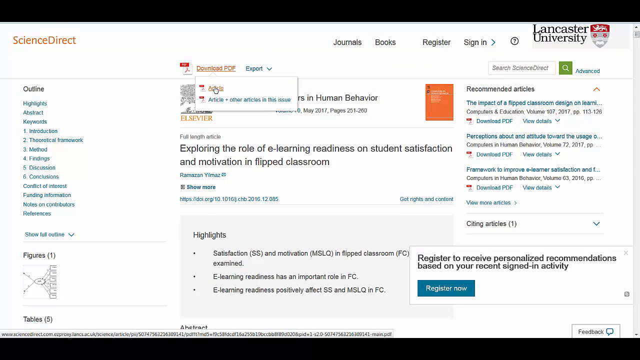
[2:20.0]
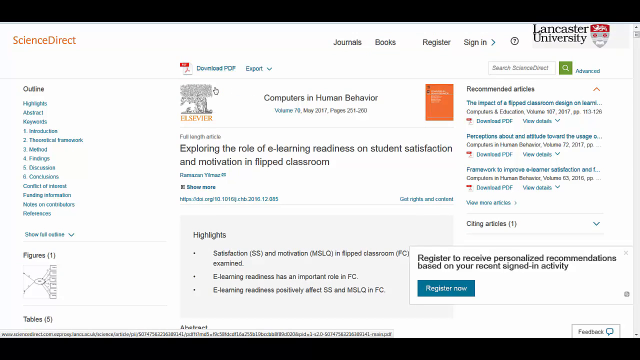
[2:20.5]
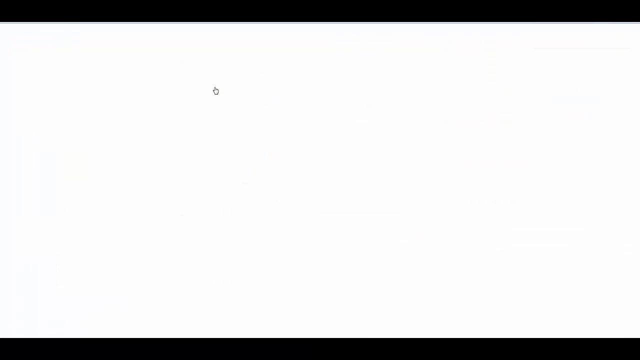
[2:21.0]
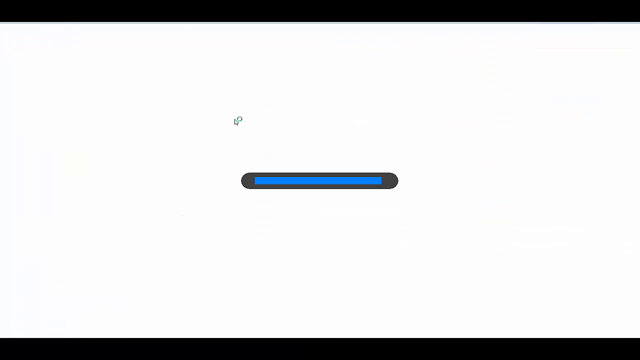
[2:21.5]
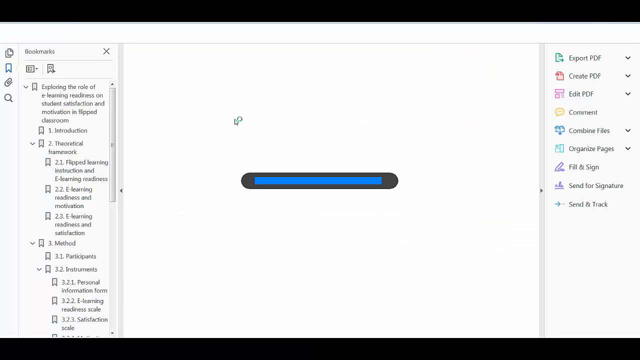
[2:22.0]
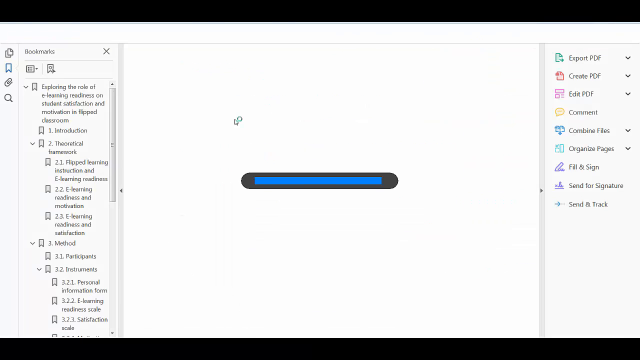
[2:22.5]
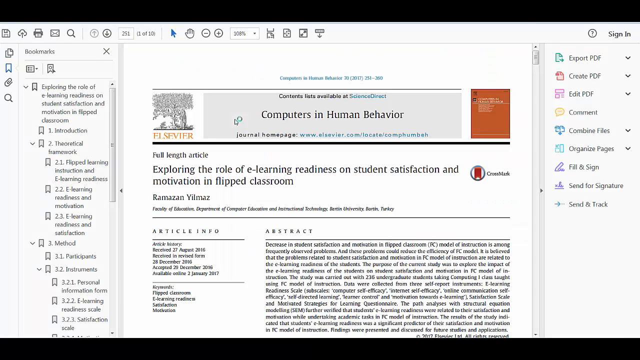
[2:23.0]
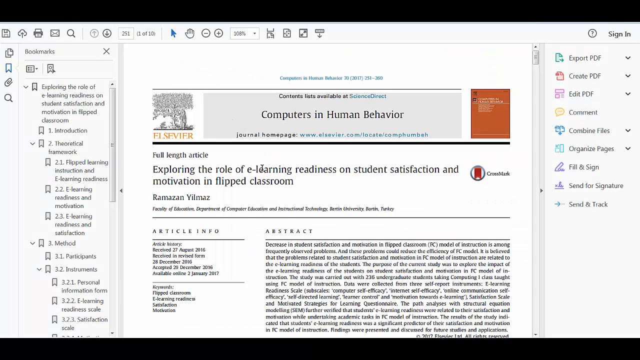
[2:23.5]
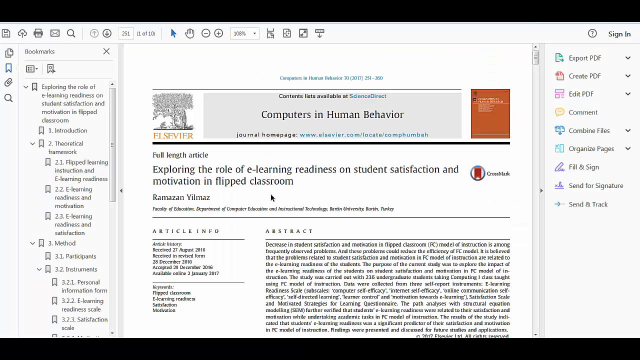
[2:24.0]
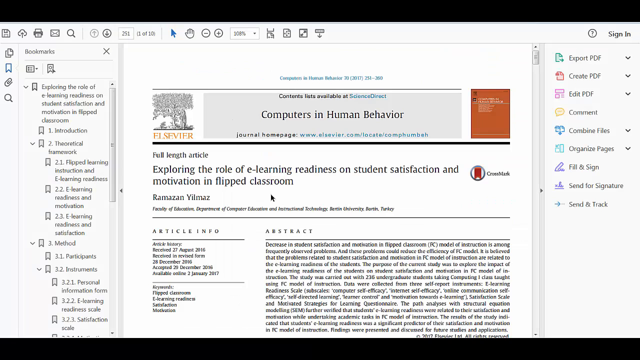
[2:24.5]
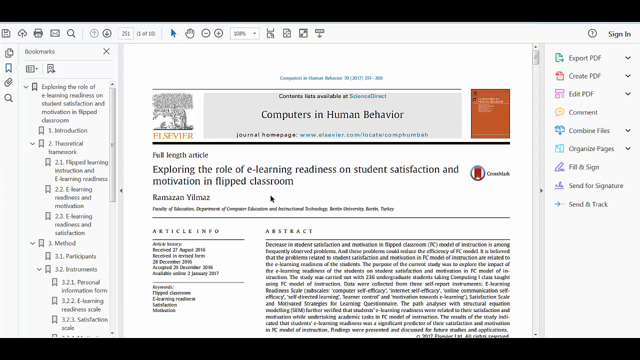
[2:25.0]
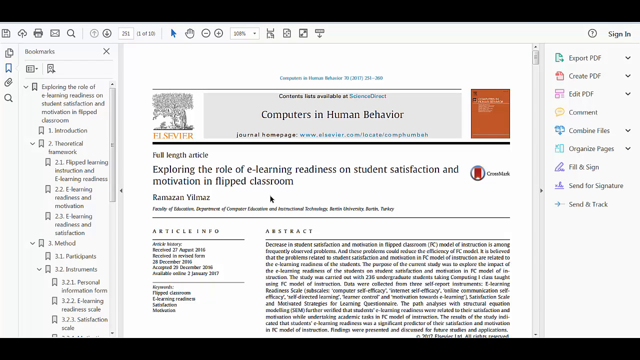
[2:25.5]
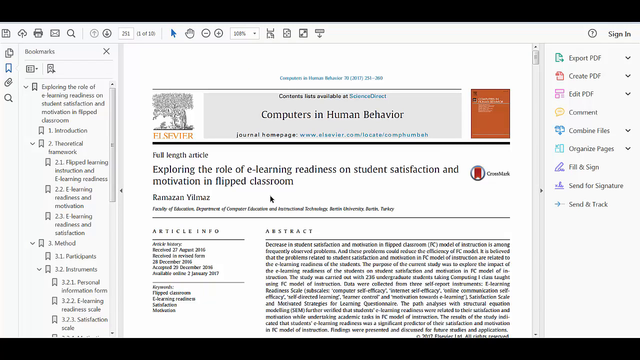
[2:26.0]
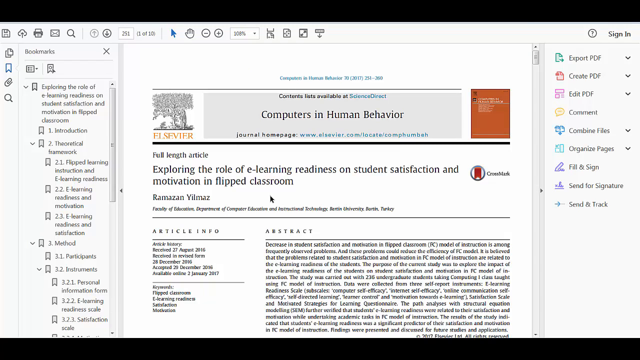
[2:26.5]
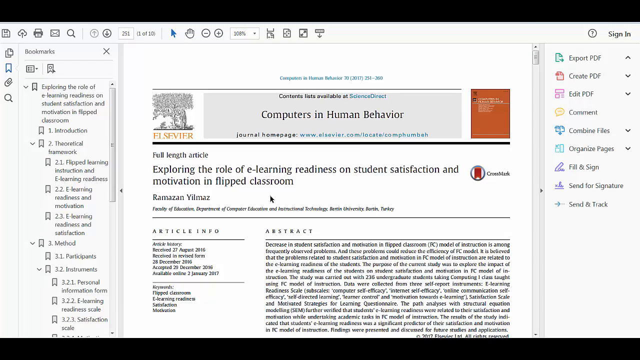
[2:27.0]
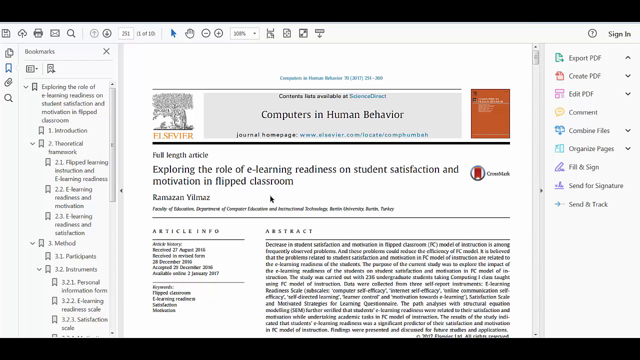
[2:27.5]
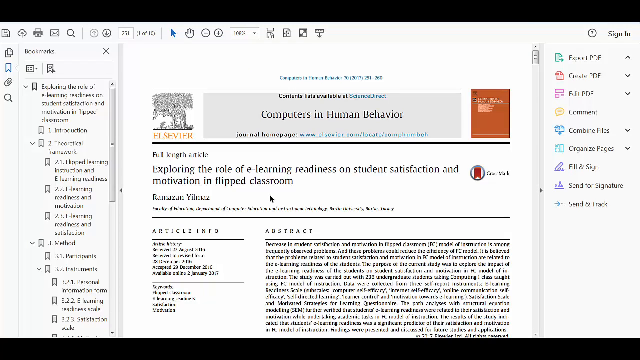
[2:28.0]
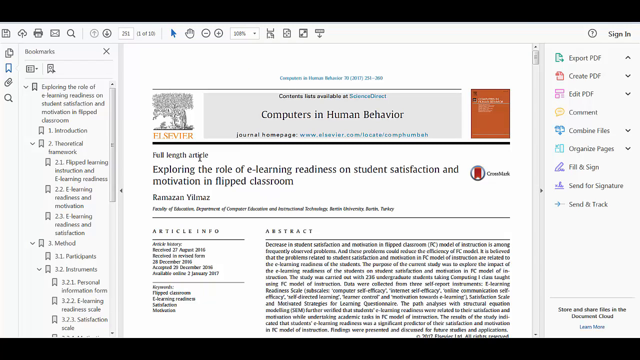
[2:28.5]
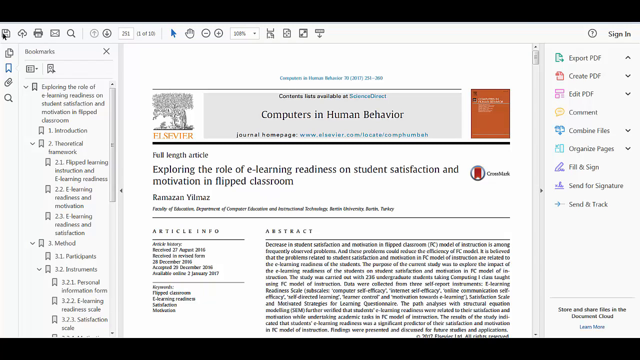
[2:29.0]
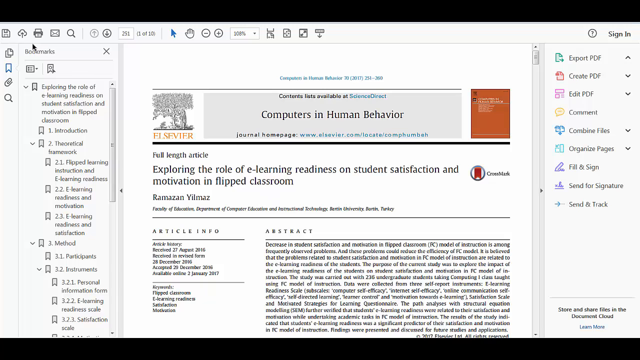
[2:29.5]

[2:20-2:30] The article chosen by the person searching on the Lancaster University site is shown. It is from "Computers in Human Behaviour", and the full-length article is titled "Exploring the role of eLearning readiness on student satisfaction and motivation in flipped classroom". The full article then appears, ready to be printed, exported or read online. On the right side of the screen are options to export as a PDF, create a PDF or edit the PDF, among many other options for the article. The person then flicks around the site, deciding what to do with the article. The person has perhaps downloaded the article, as a blue line goes across the screen that looks like a download has happened.